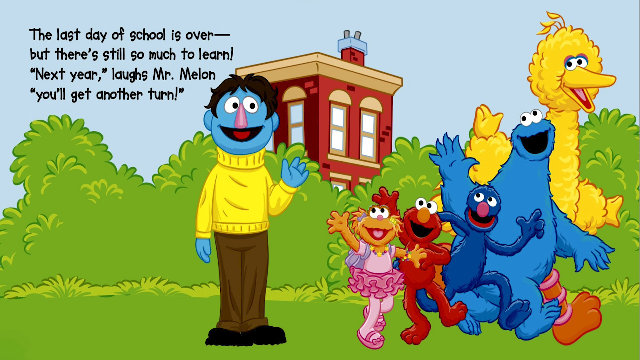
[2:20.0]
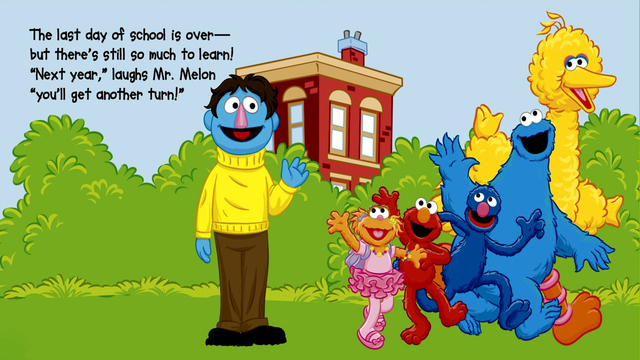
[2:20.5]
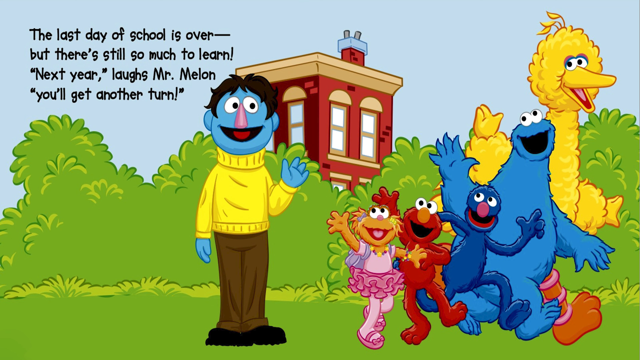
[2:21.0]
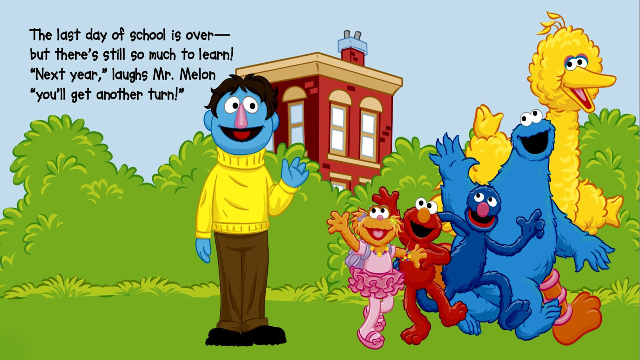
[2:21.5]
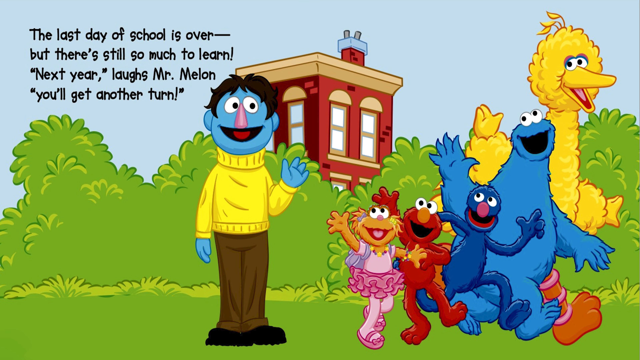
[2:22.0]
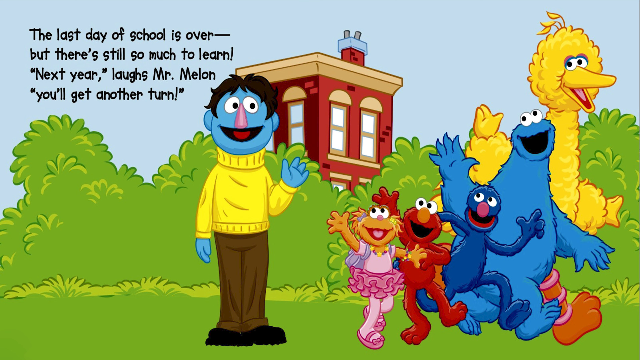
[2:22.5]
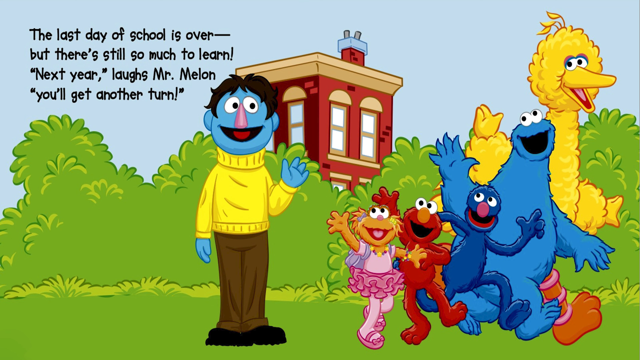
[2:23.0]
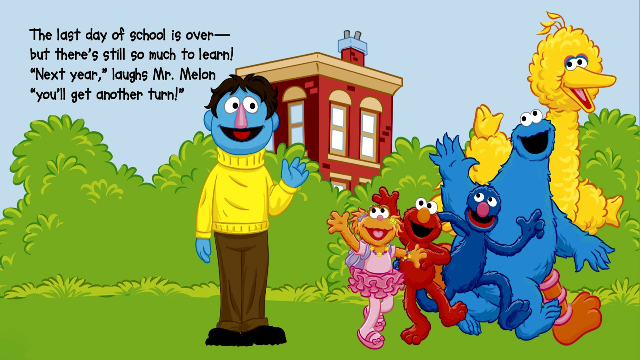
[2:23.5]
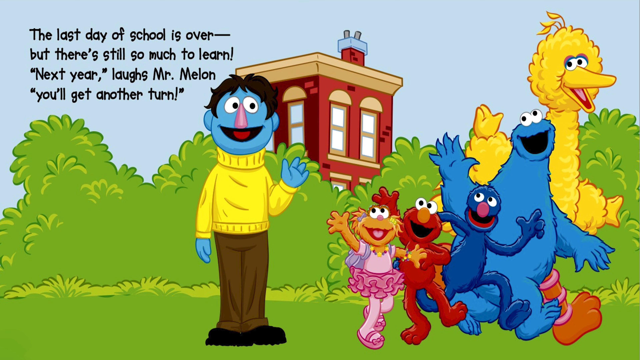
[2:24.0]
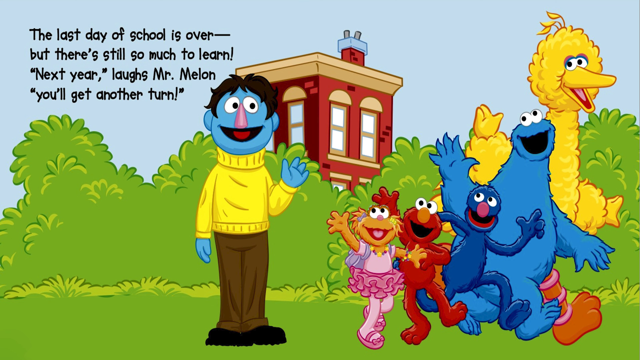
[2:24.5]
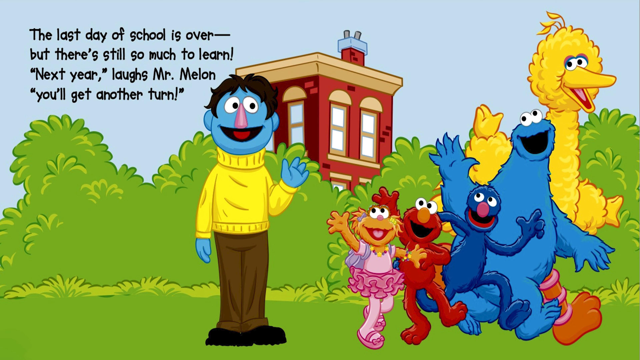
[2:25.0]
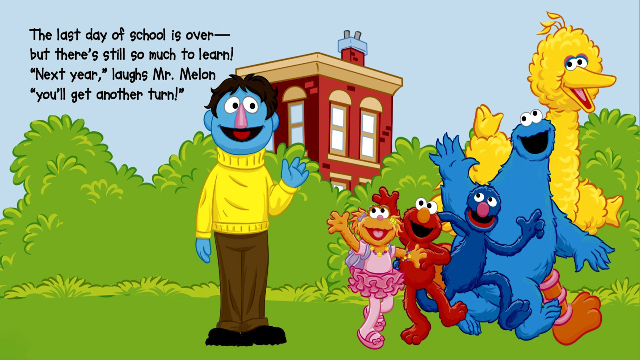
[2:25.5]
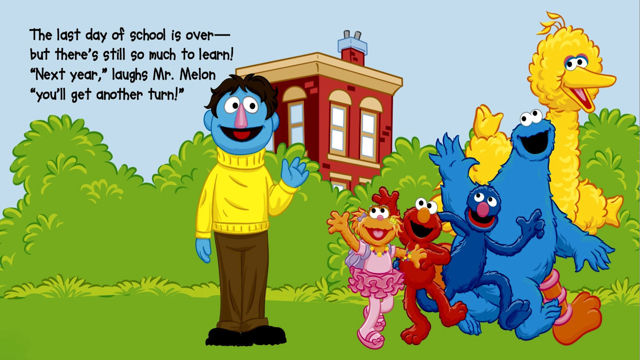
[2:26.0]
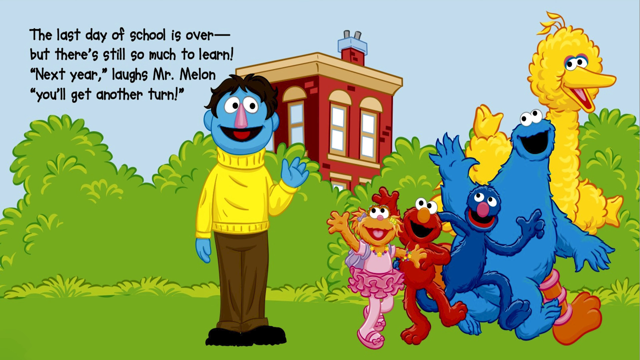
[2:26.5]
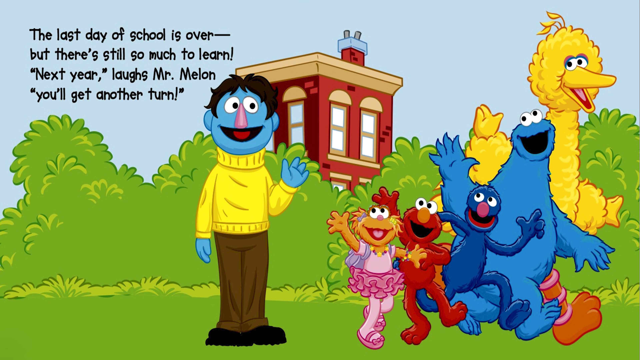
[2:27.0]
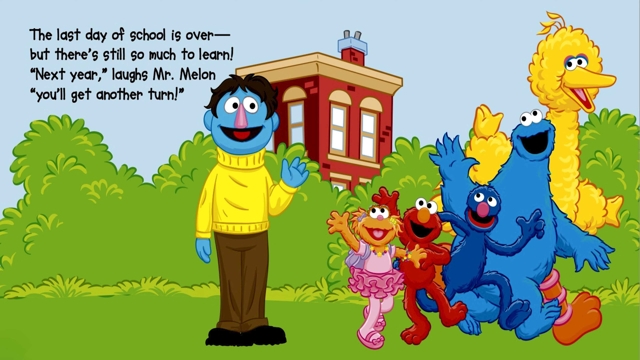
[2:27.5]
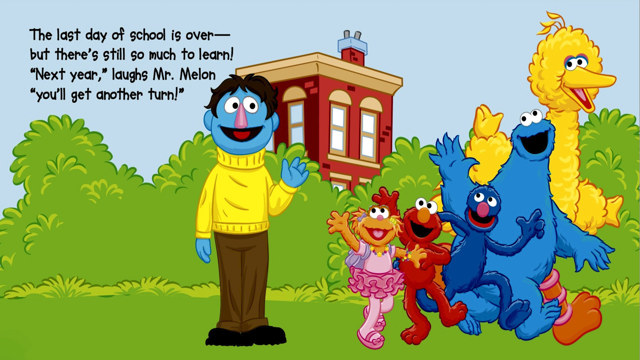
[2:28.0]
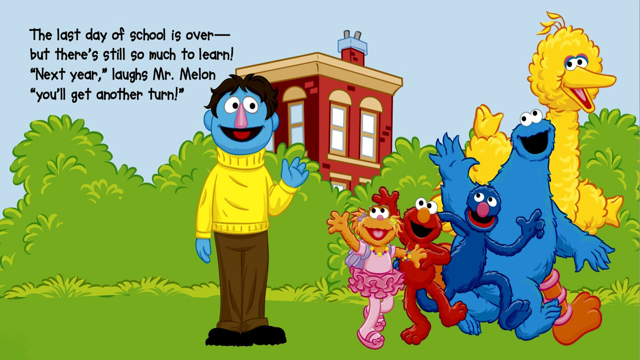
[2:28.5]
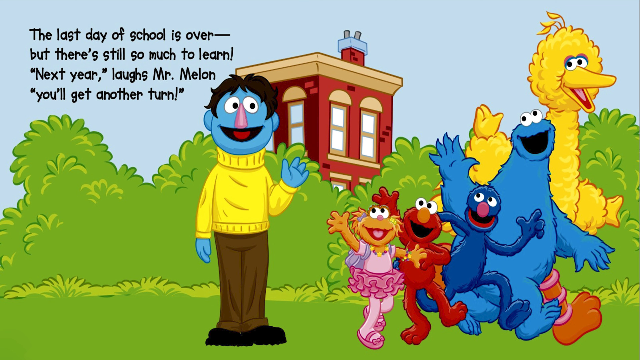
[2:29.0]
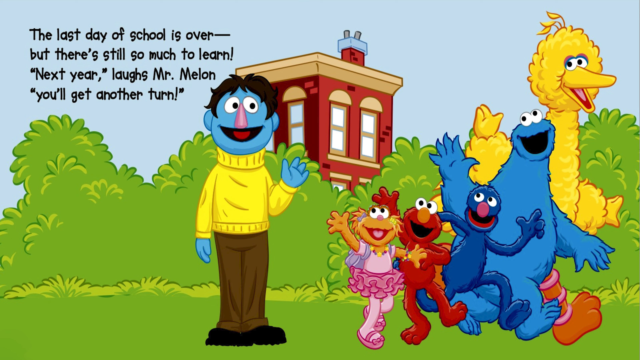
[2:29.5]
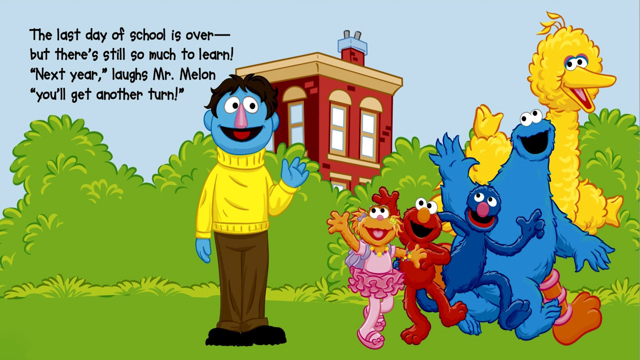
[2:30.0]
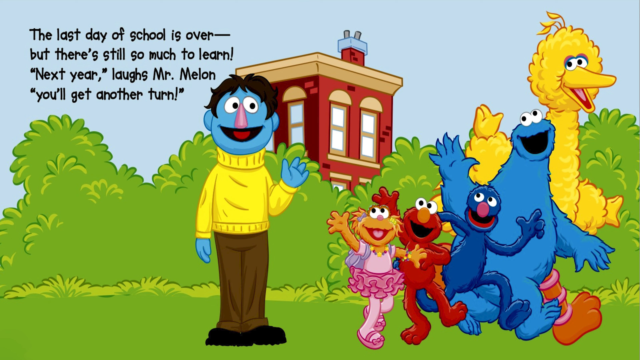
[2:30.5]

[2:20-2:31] The characters are outside, and text says "The last day of school is over, but there's still so much to learn. Next year, laughs Mr. Melon, we'll get another turn." The sky is blue, the school building looks like red brick, and there seems to be a chimney. The characters are most likely walking home together from school. There are tall bushes almost as tall as Big Bird, the tallest character, whose head just clears them. The other students mostly seem shorter than the tallest bushes, while the teacher is taller than the tallest bush.